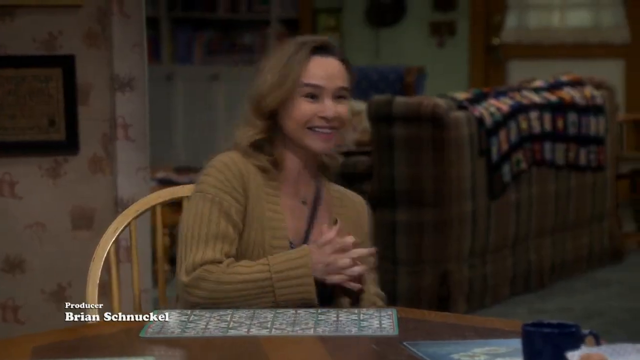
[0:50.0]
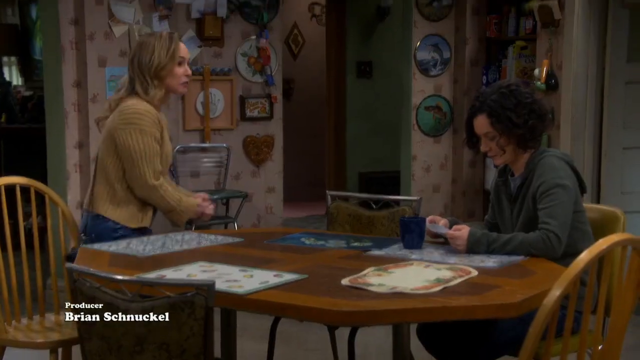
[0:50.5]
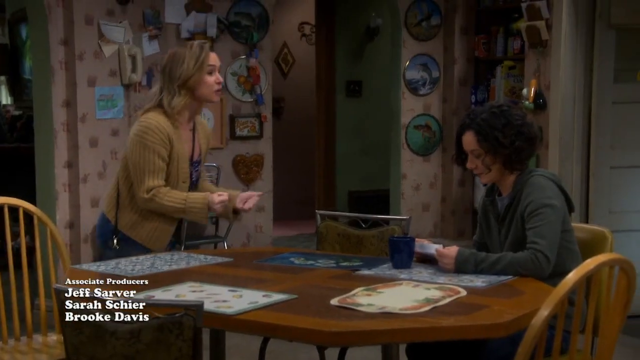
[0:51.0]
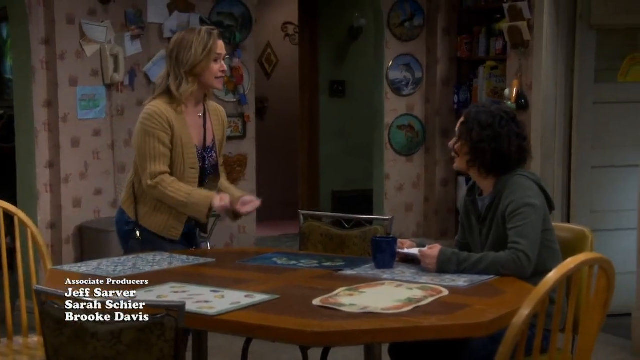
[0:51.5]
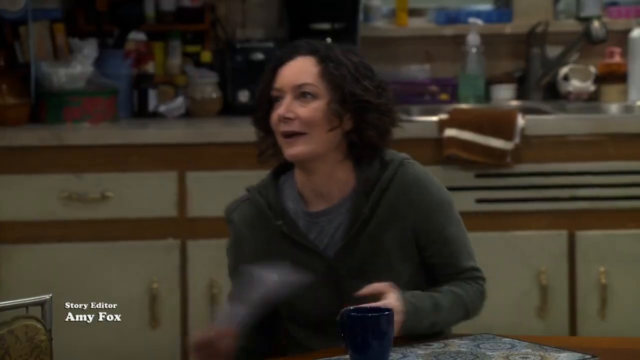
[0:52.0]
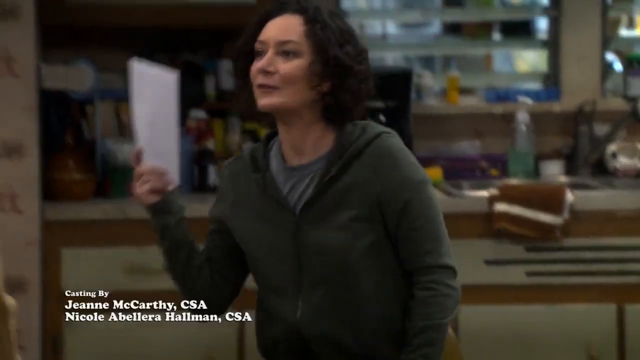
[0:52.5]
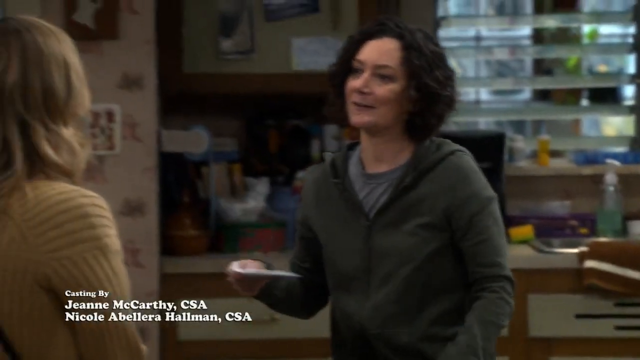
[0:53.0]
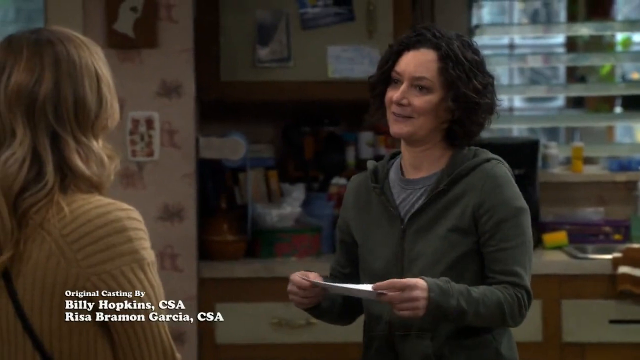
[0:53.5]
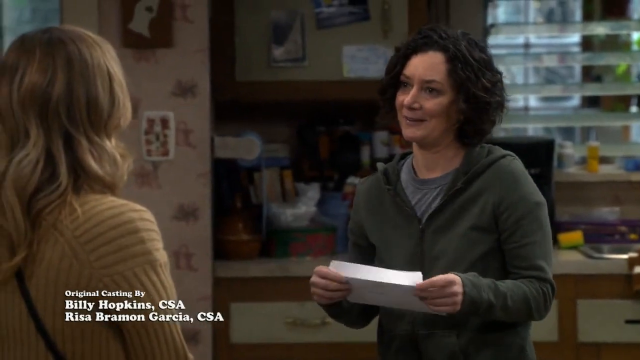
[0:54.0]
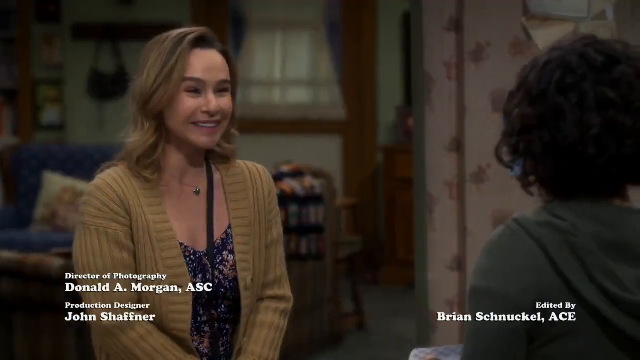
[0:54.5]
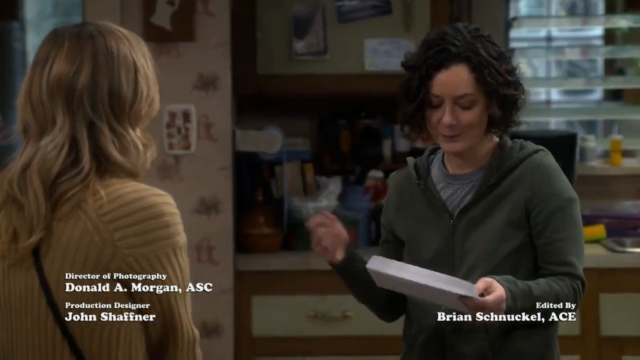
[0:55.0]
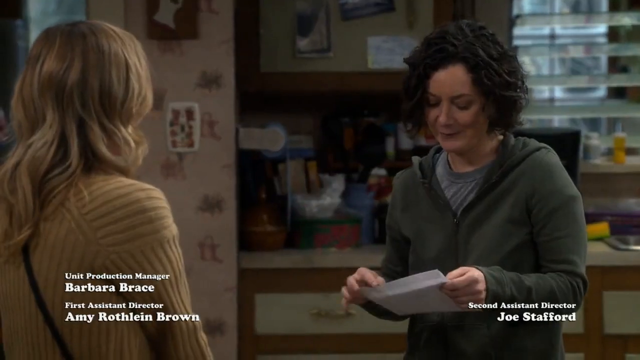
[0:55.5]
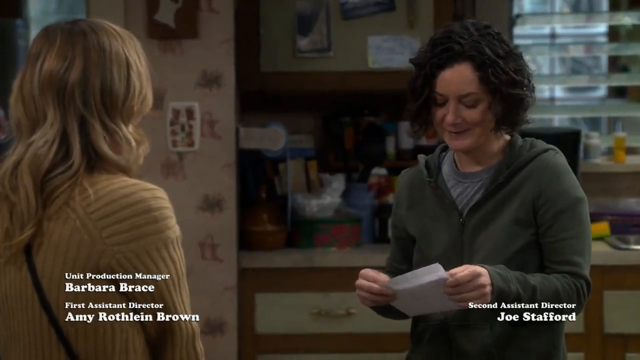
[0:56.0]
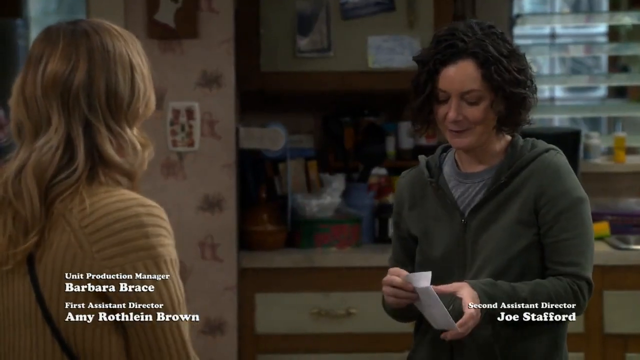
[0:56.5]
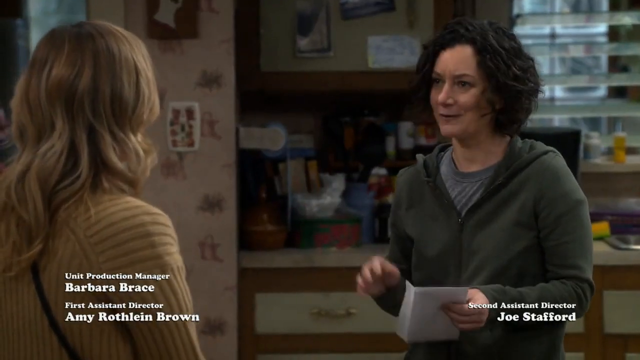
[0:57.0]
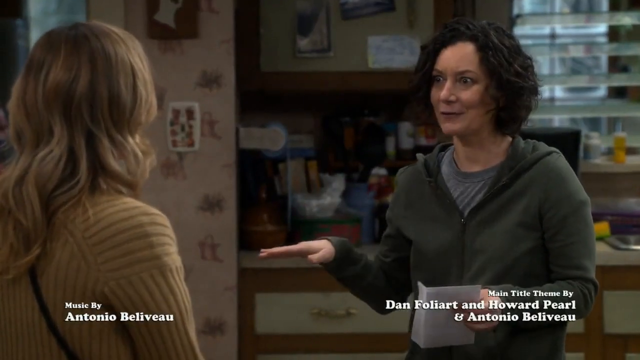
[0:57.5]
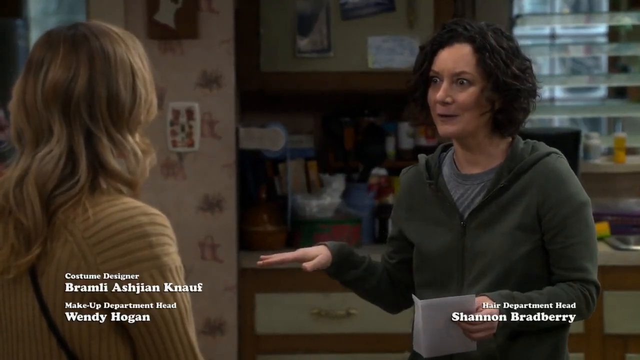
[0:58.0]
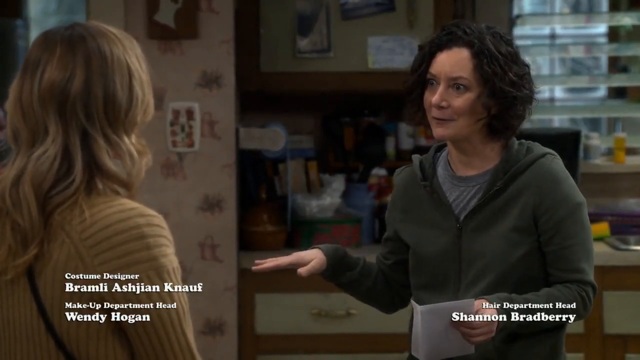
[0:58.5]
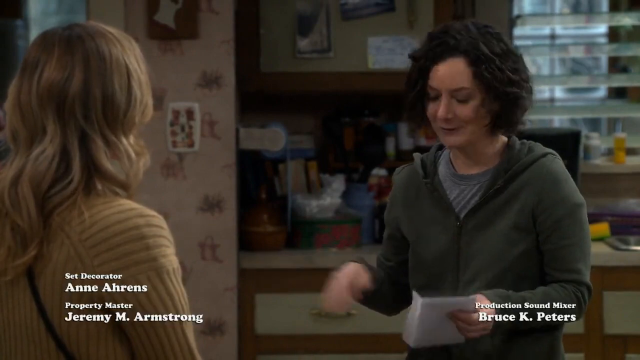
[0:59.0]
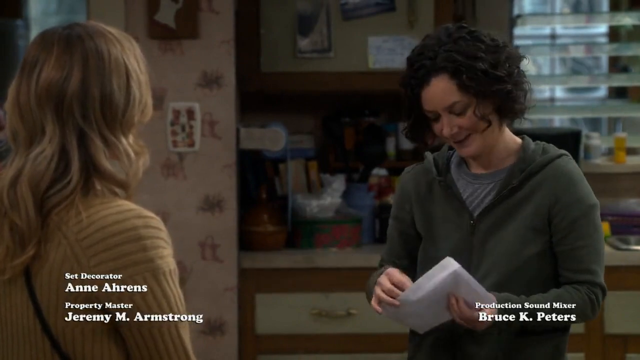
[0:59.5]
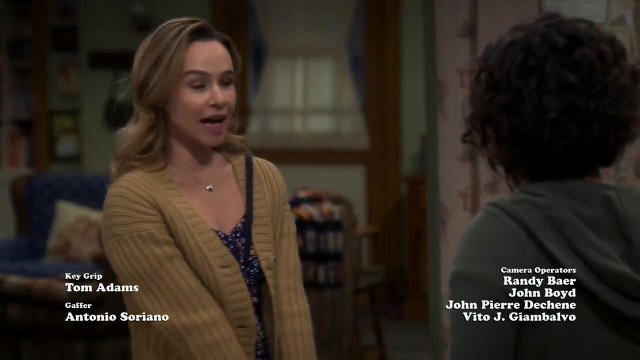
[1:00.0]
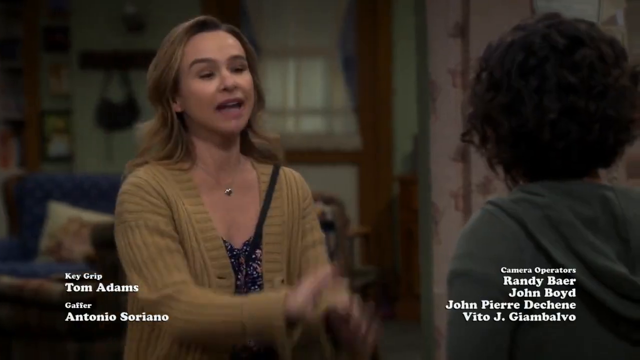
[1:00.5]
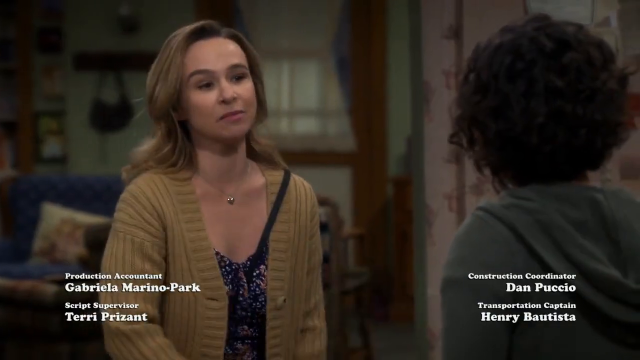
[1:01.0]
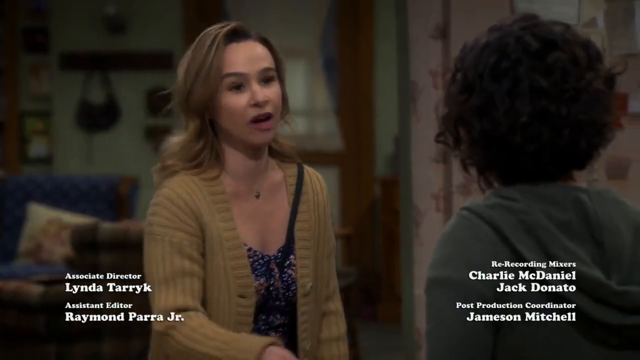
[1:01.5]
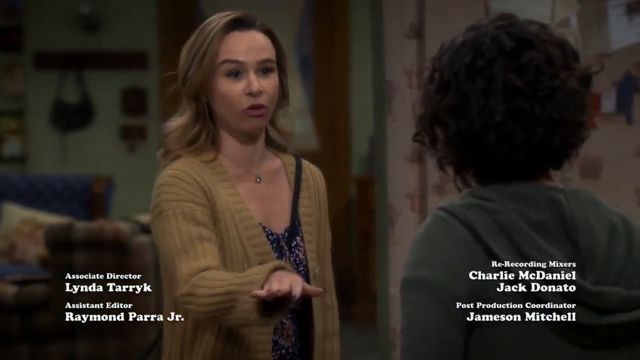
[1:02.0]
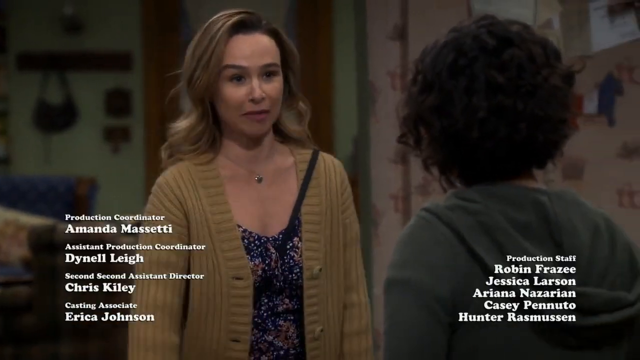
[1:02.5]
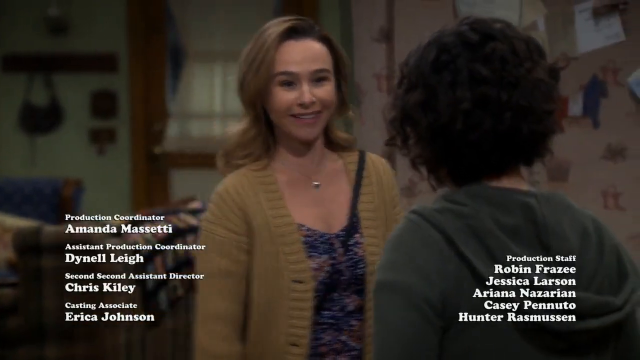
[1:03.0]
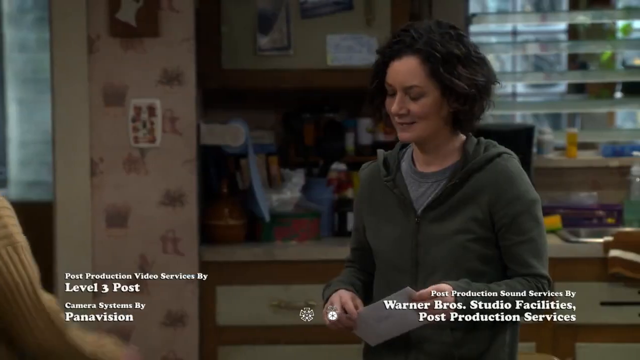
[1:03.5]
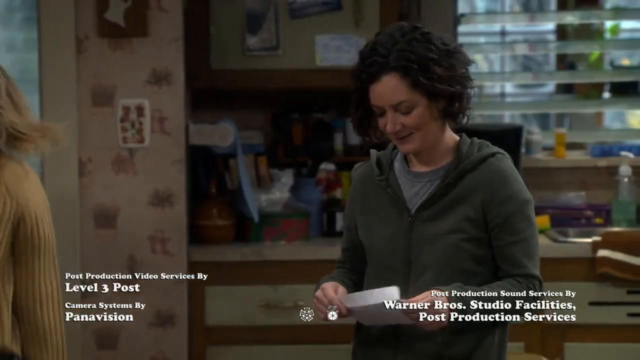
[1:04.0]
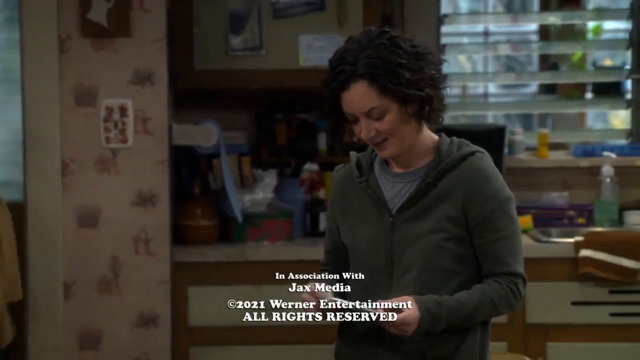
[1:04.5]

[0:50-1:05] The woman with light brown hair, wearing a light brown jacket and a messenger bag with a black strap hanging across her neck, stands up from the kitchen chair after clapping her hands in excitement and closes both her fists while talking with the woman in the dark olive t-shirt. The woman in the dark olive t-shirt has black hair and remains seated on the dining chair, then suddenly stands up holding the white envelope as the conversation continues. She looks at the white envelope, holding it with both hands, and waves her hand while still talking with the woman in the light brown jacket. The woman in the light brown jacket gesticulates, waving her hand, as she walks away through the kitchen door.